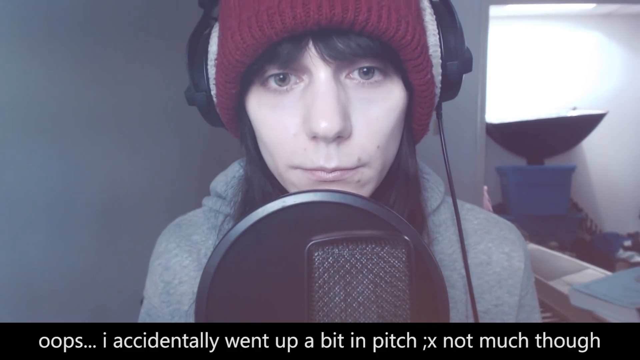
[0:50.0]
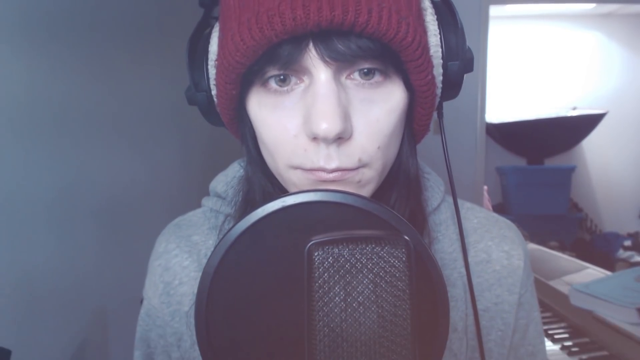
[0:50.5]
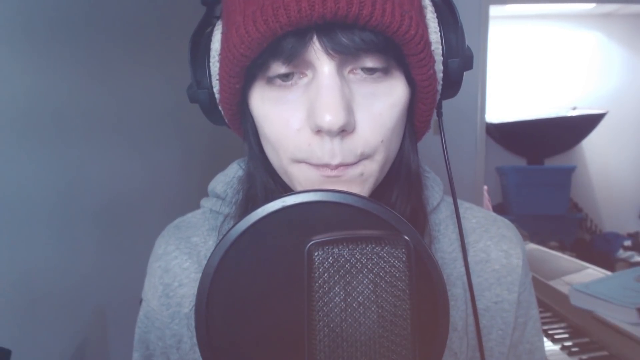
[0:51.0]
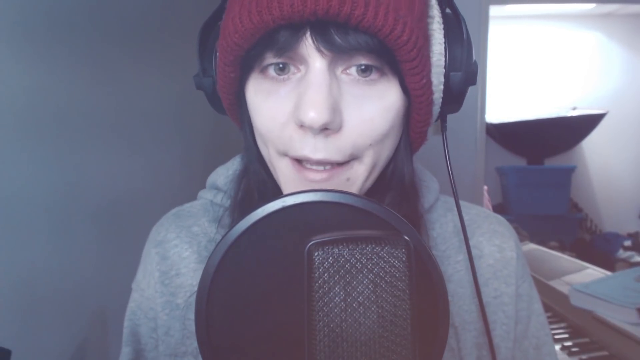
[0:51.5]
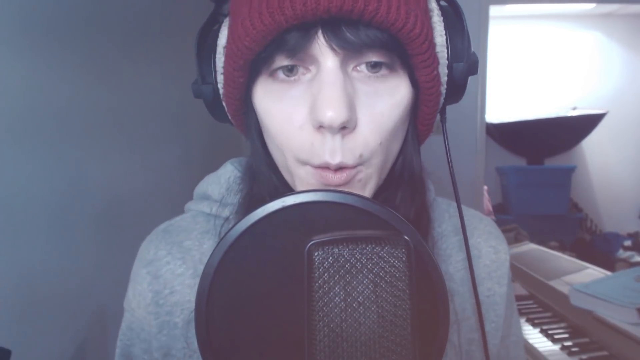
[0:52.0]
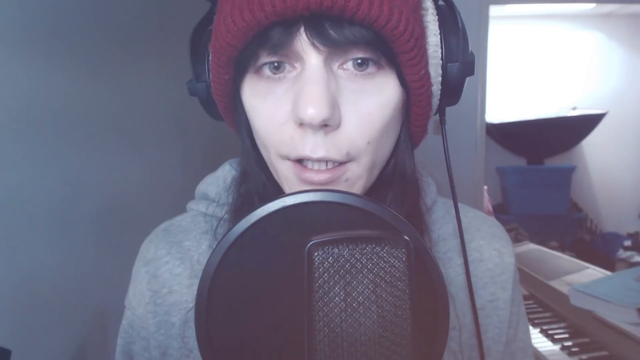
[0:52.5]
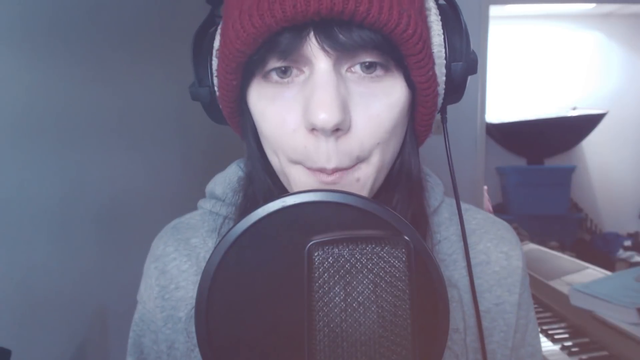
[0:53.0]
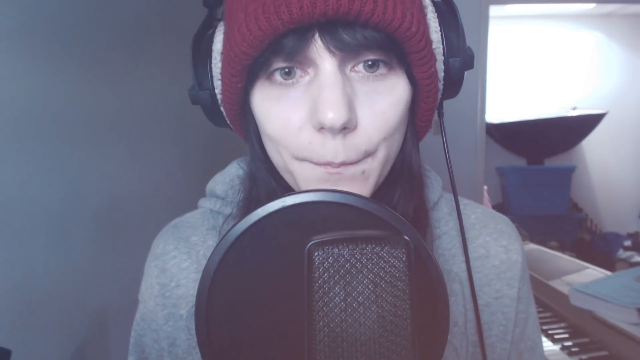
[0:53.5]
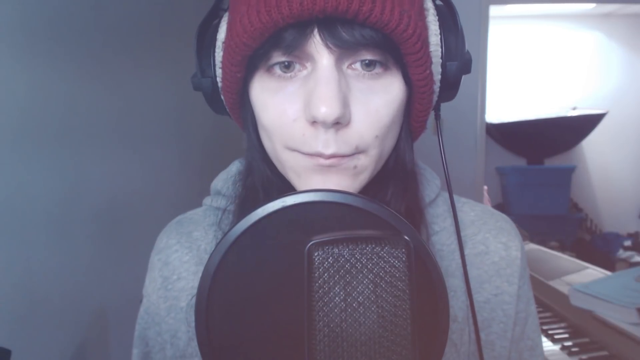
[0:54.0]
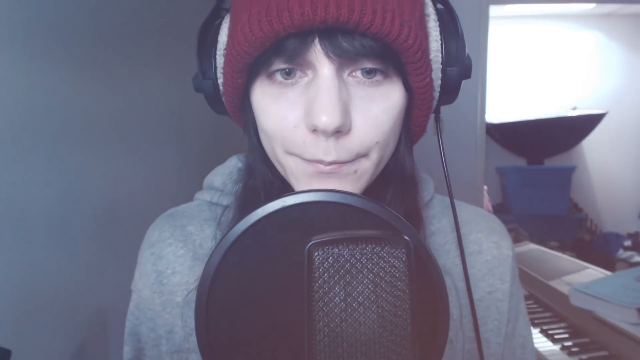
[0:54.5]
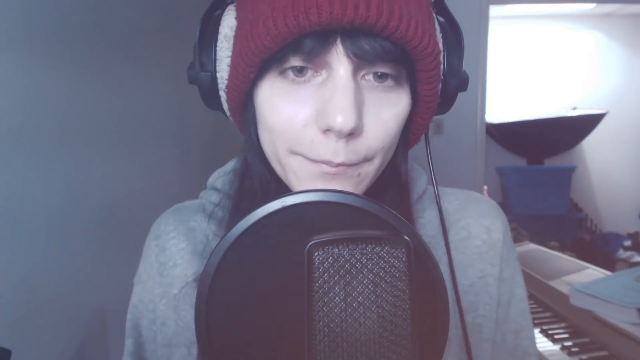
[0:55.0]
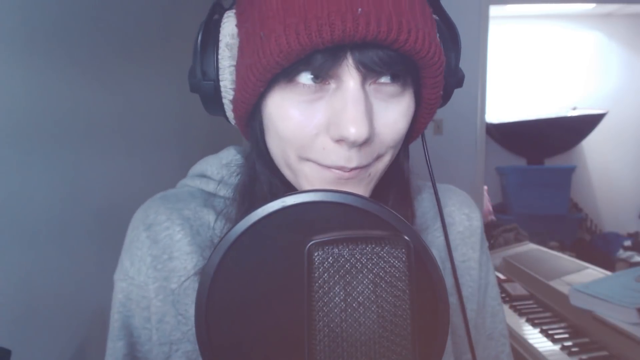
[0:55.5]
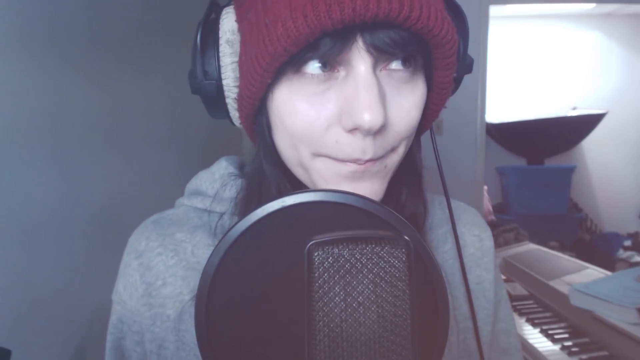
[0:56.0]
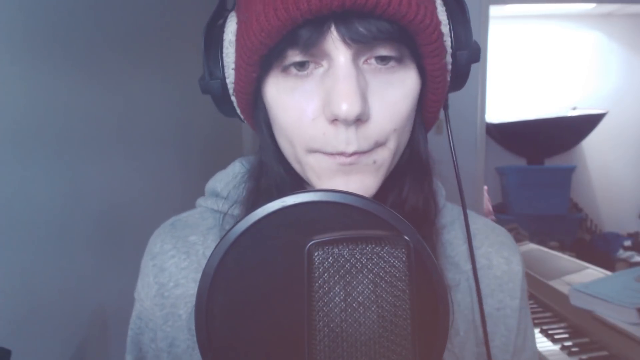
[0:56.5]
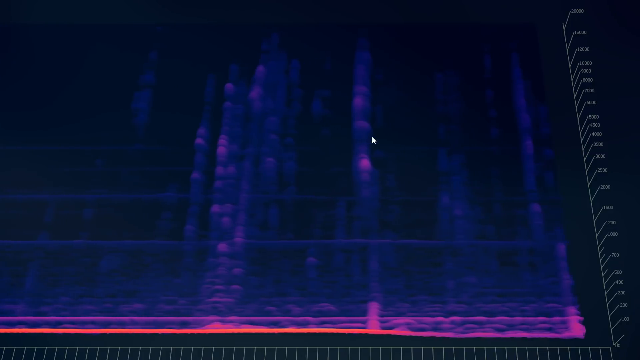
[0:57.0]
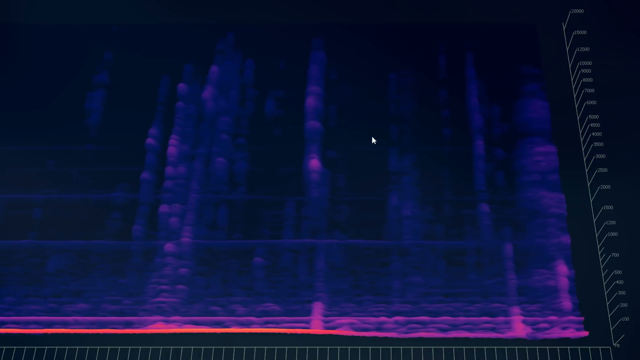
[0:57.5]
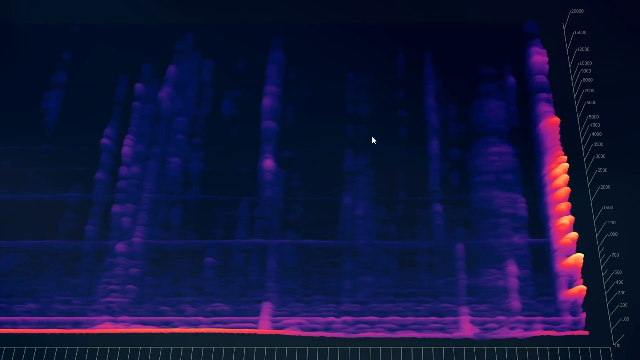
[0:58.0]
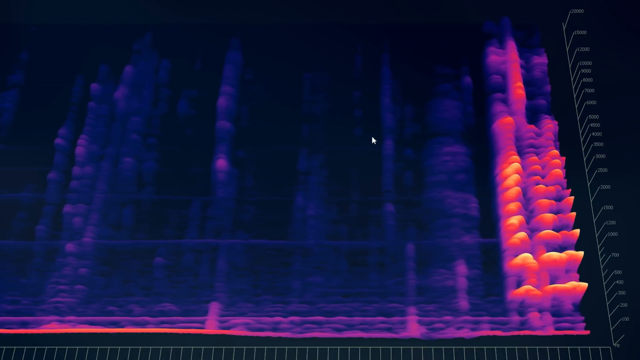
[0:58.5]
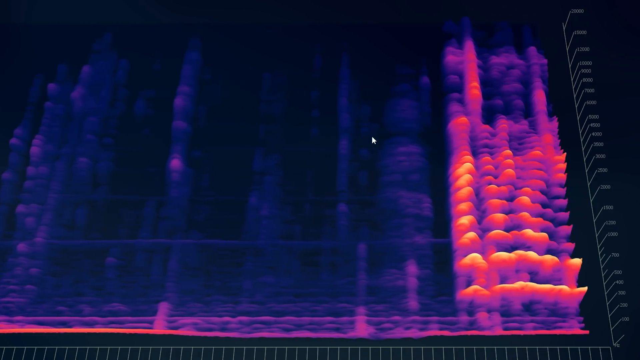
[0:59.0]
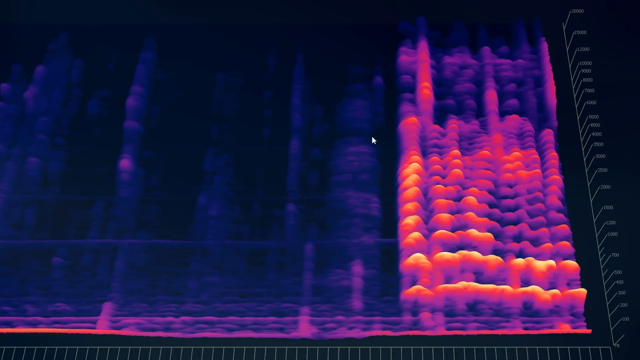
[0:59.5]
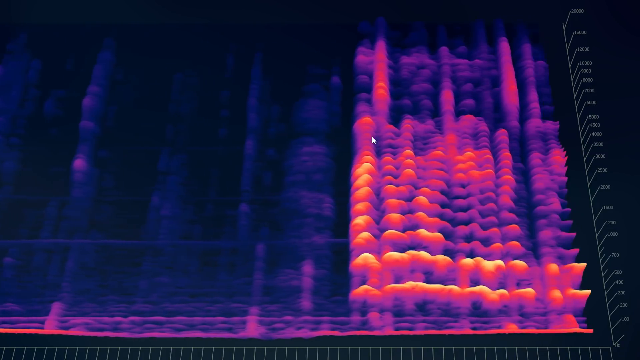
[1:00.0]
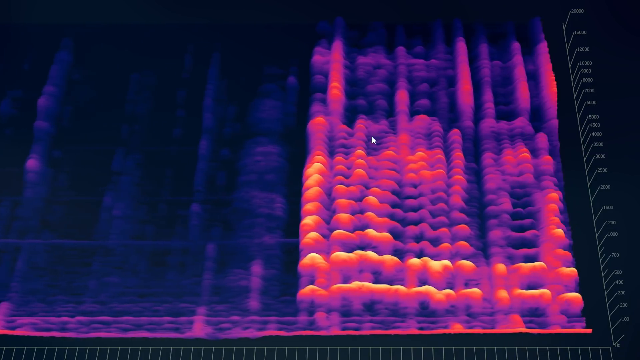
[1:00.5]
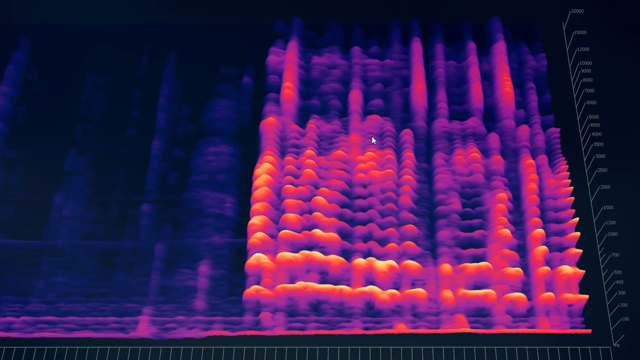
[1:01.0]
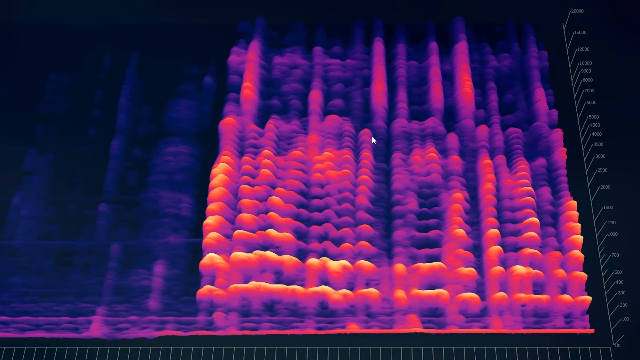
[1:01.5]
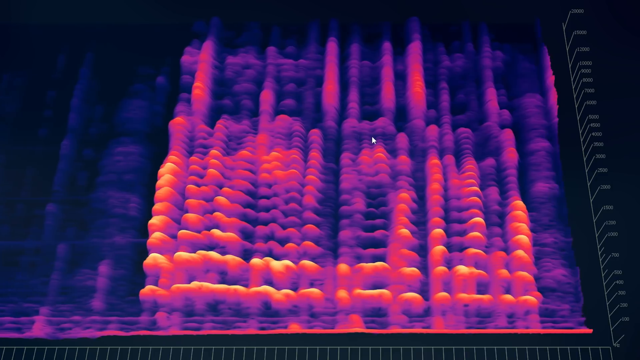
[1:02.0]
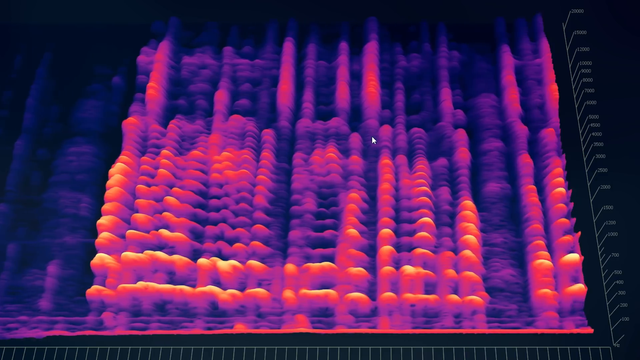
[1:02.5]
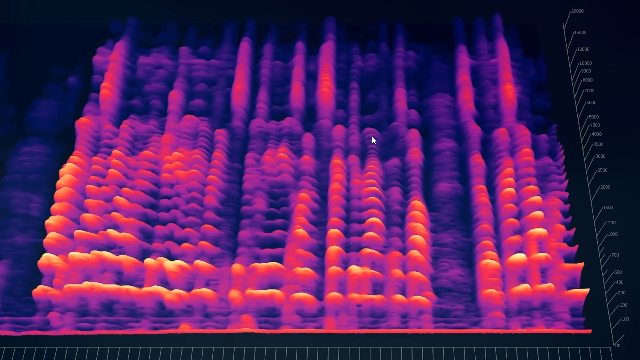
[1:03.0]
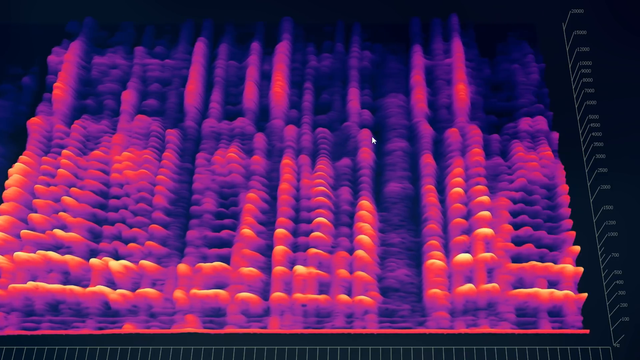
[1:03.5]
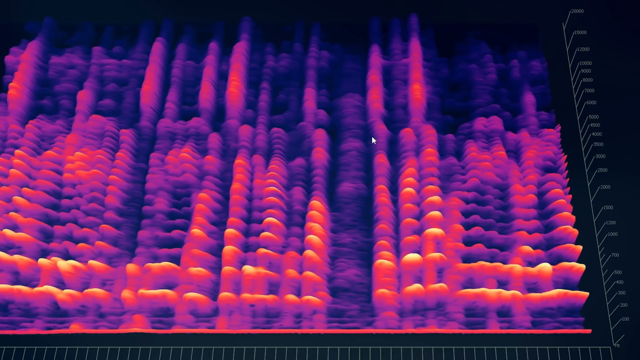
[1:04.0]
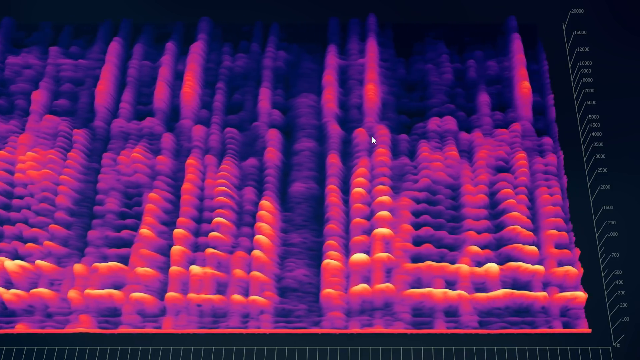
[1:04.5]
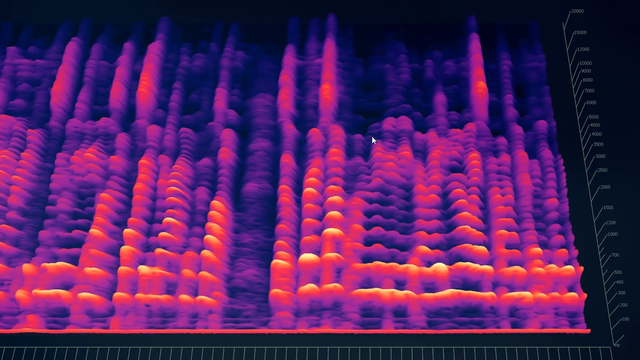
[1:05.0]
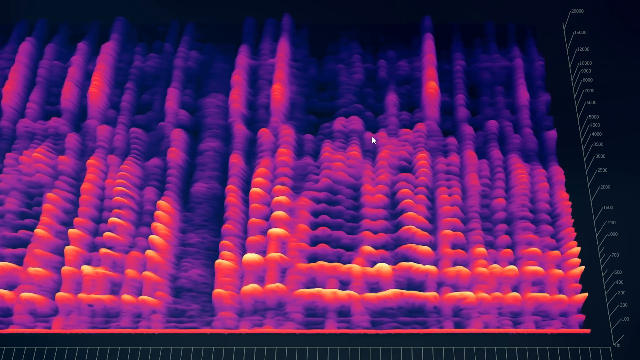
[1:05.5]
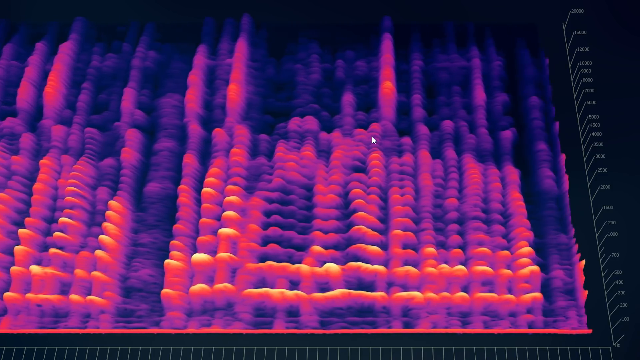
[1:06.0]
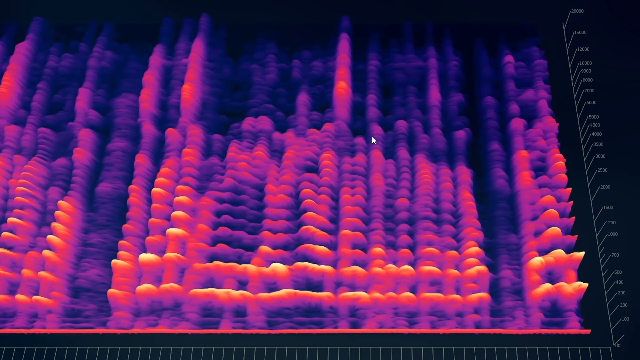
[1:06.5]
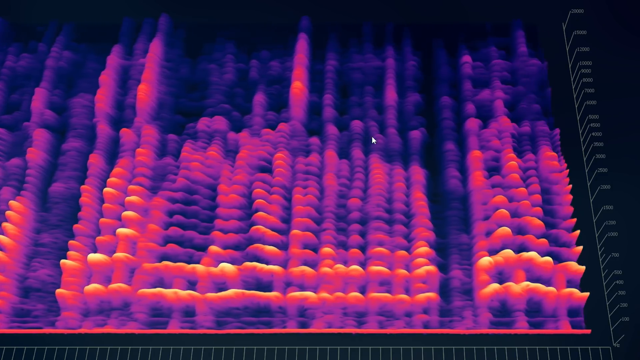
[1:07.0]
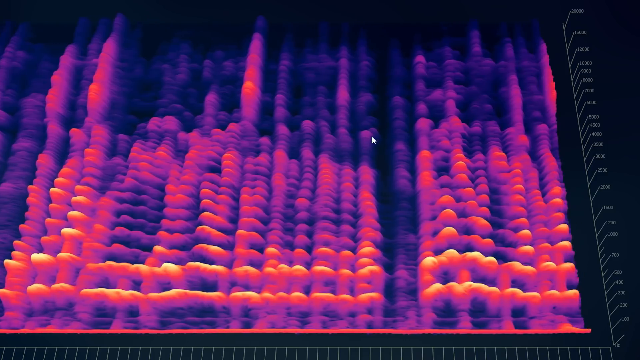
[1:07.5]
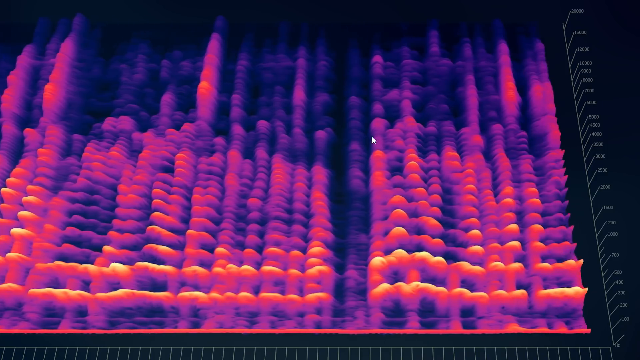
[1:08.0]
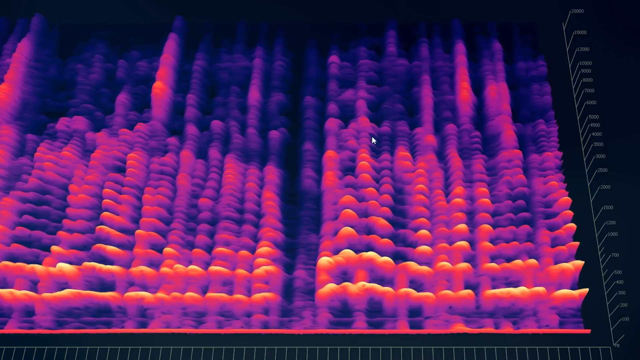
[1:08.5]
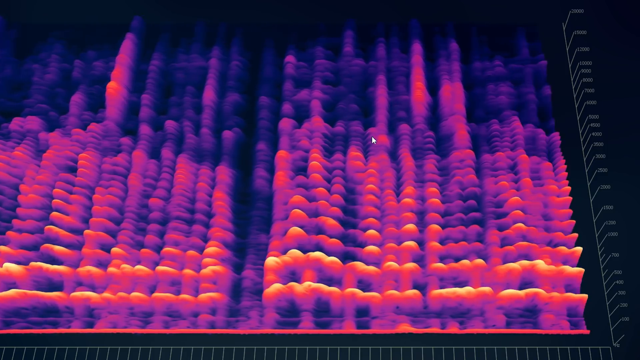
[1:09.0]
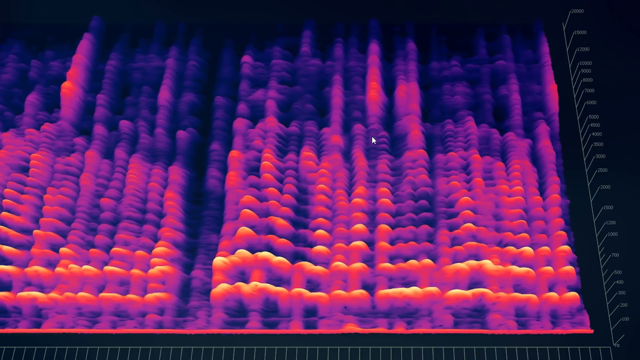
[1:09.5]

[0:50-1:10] A person in a red beanie with long black hair wears a wired black headset and has a black microphone in front of them; they also appear in a gray beanie. In the background are a gray wall, a very large light and some other miscellaneous objects on the ground. A black banner at the bottom shows white text reading "oops I accidentally went up a bit in pitch not much though." The video then shows a purple and blue screen with some red, bumpy colors, and a very large line labeled with numbers from 100 all the way to 20,000. It appears the person is making noises with their mouth. Small, somewhat 3D multicolored bumps are visible.